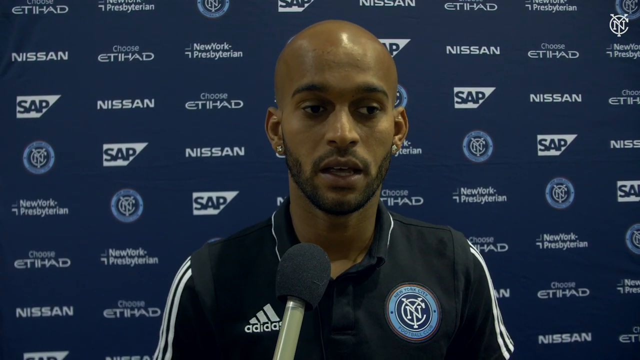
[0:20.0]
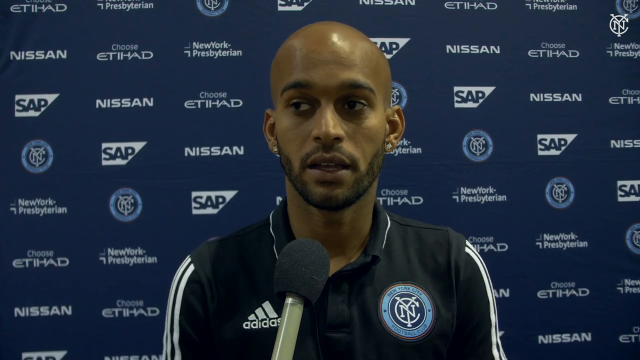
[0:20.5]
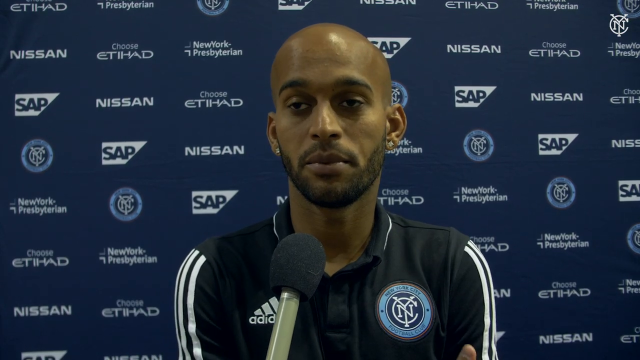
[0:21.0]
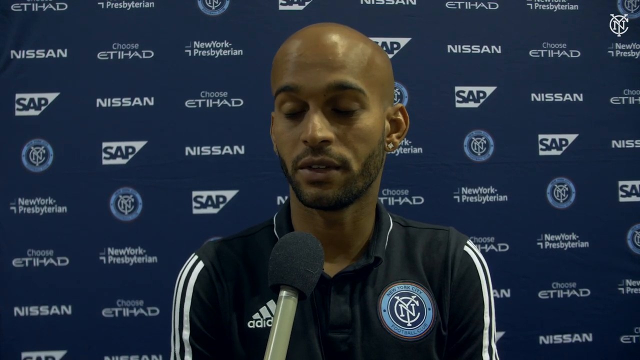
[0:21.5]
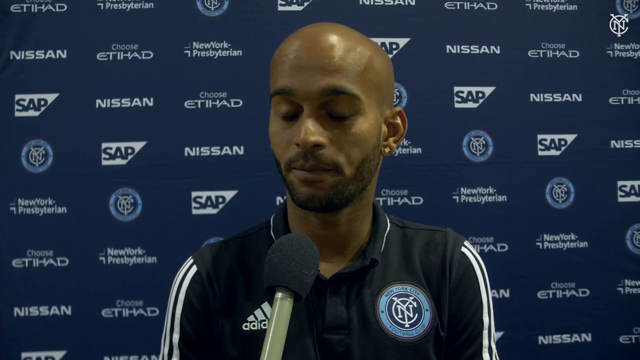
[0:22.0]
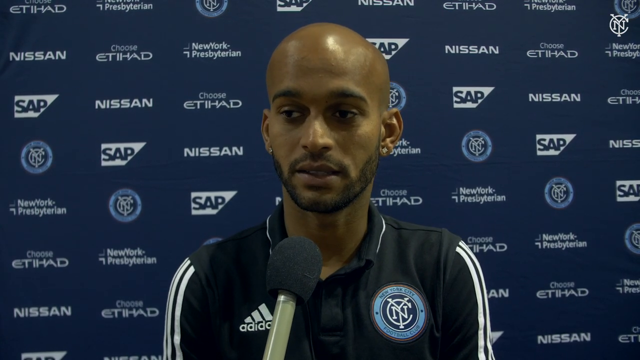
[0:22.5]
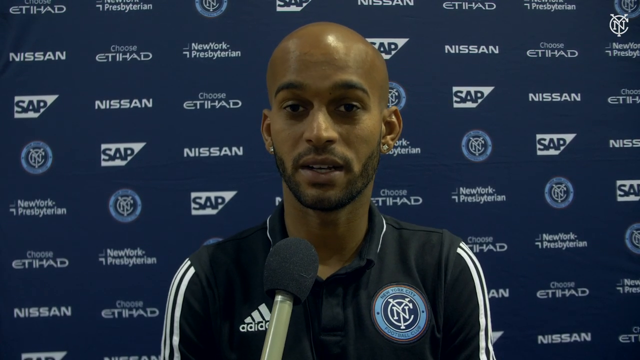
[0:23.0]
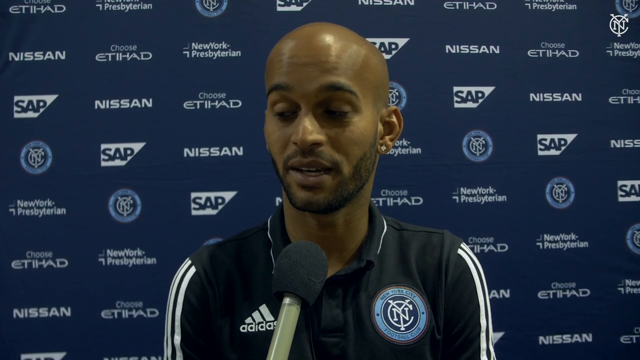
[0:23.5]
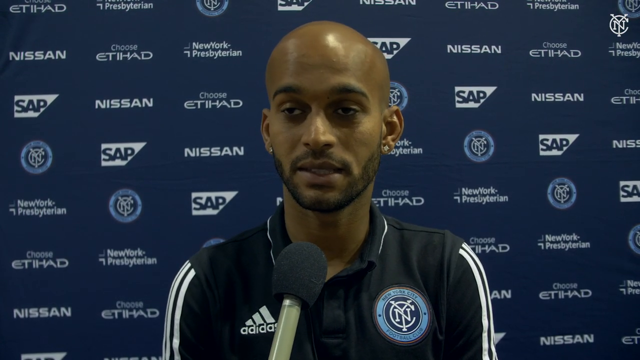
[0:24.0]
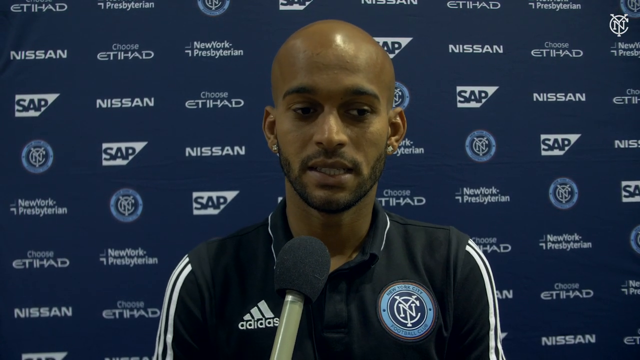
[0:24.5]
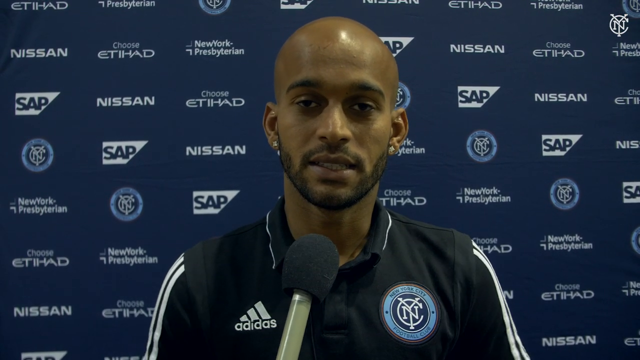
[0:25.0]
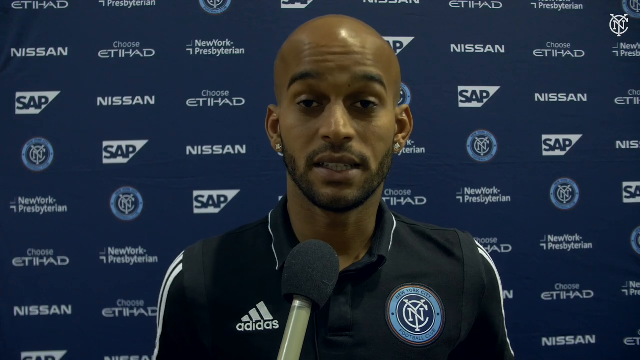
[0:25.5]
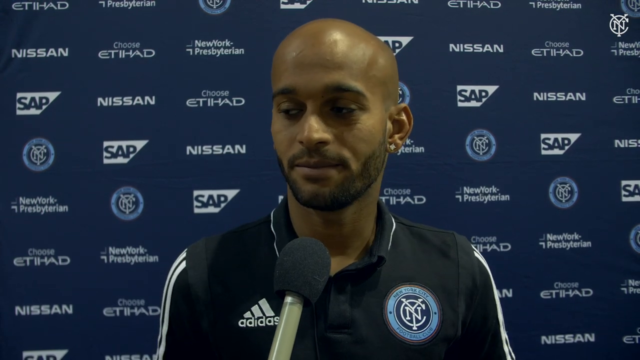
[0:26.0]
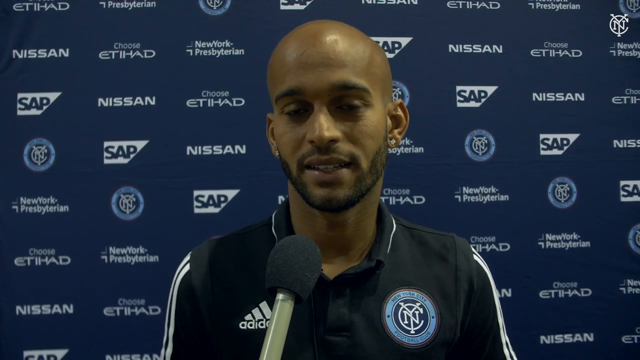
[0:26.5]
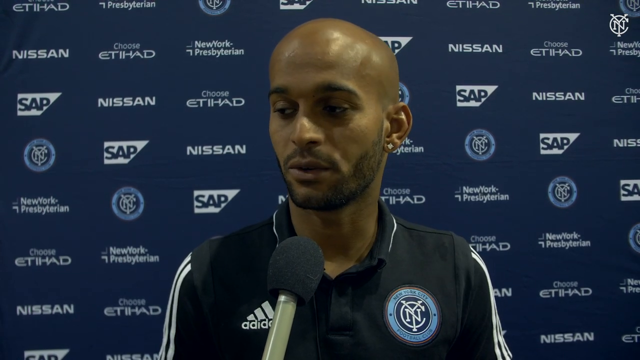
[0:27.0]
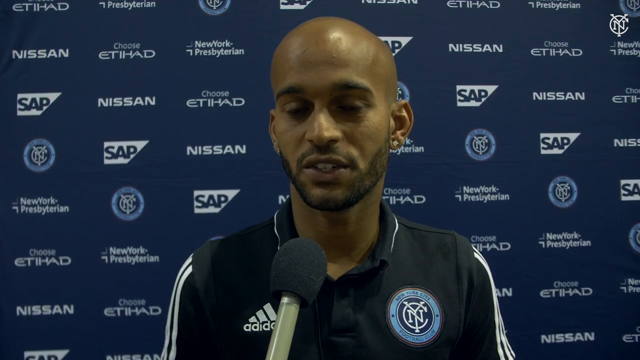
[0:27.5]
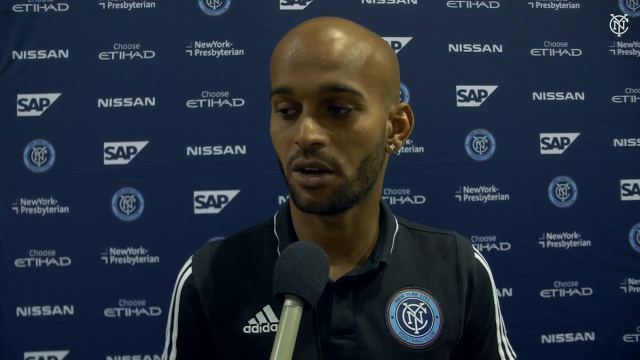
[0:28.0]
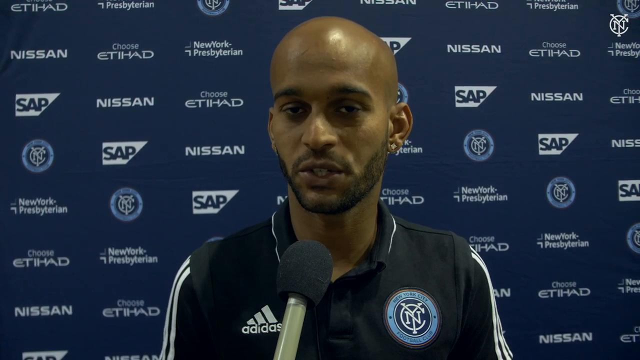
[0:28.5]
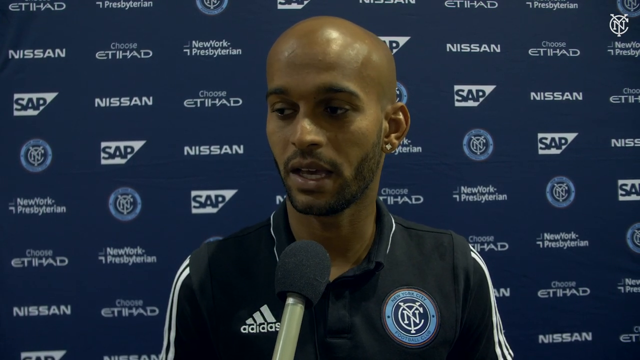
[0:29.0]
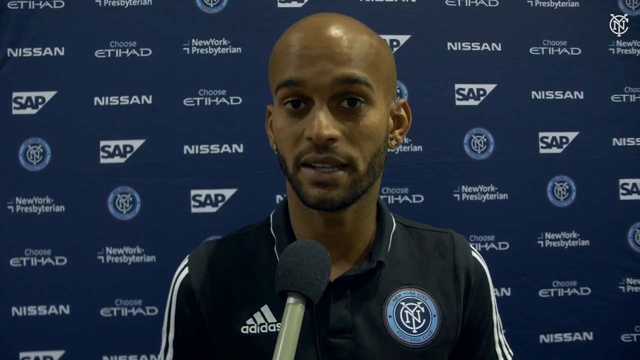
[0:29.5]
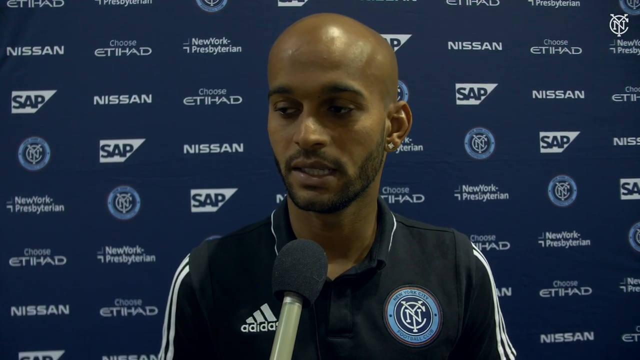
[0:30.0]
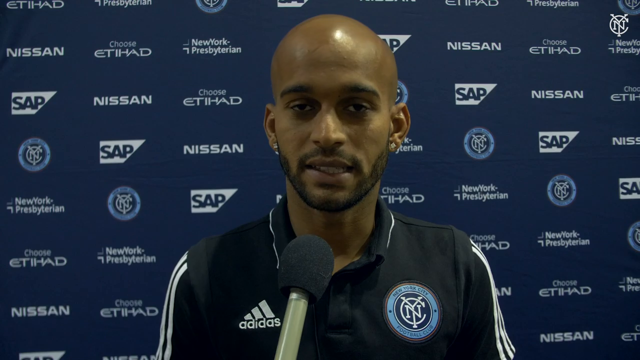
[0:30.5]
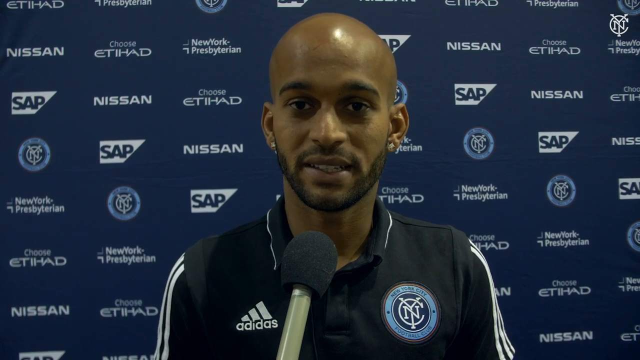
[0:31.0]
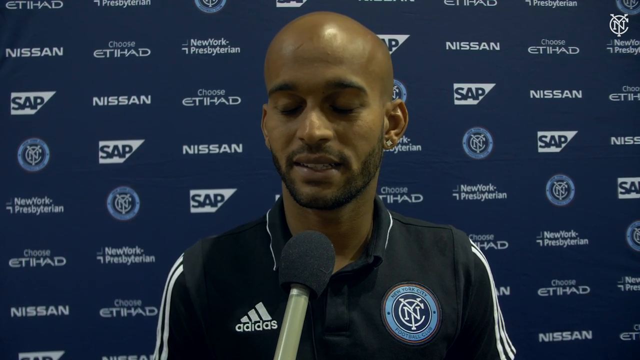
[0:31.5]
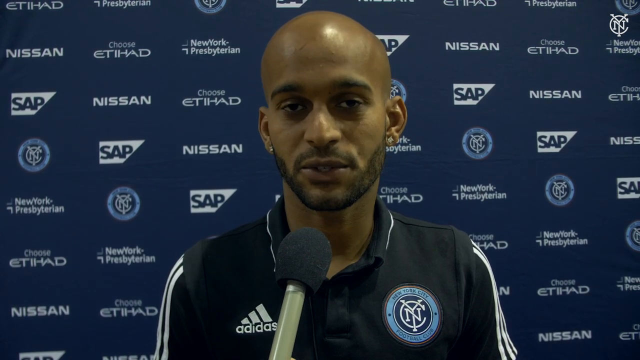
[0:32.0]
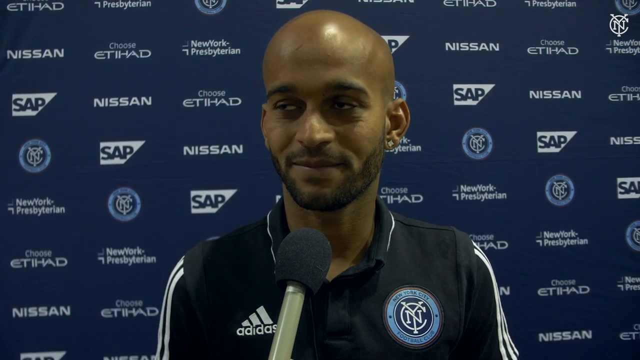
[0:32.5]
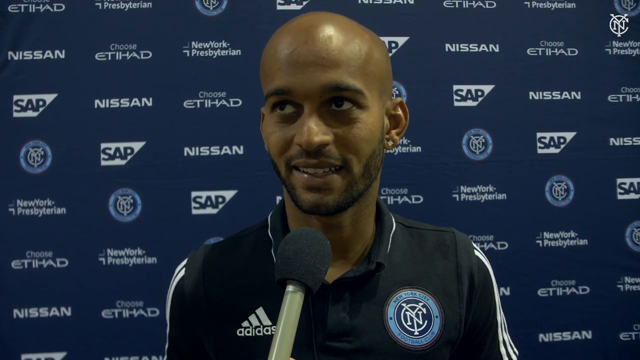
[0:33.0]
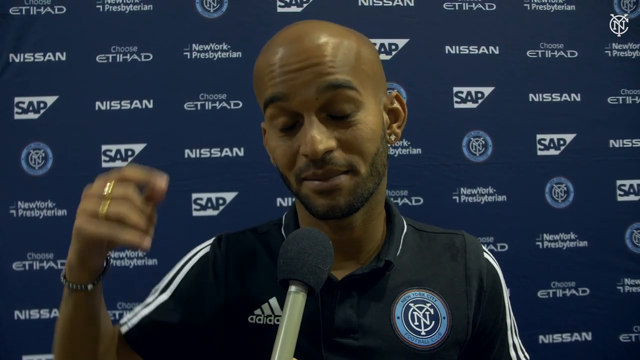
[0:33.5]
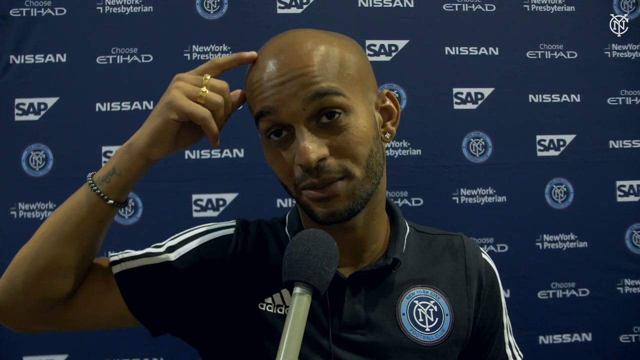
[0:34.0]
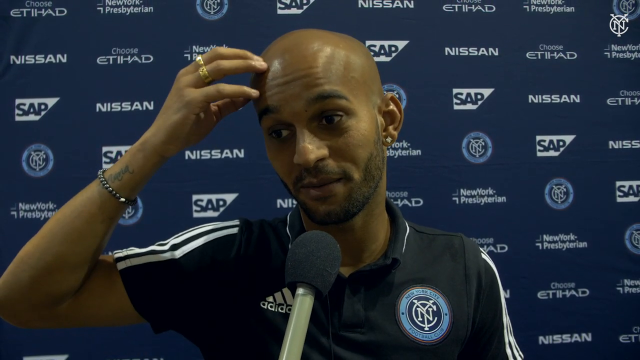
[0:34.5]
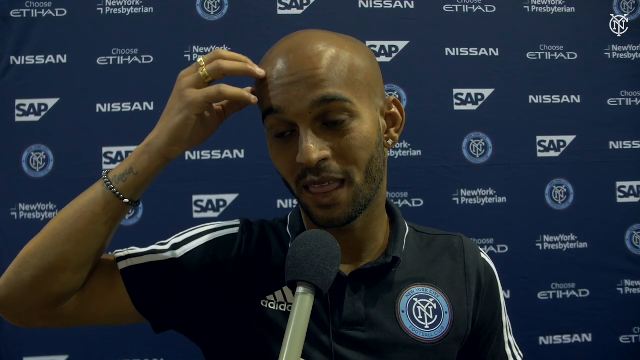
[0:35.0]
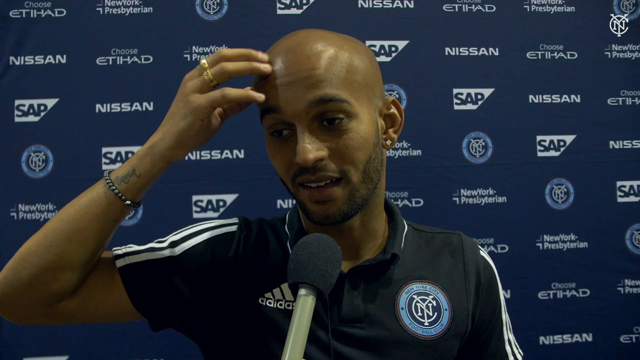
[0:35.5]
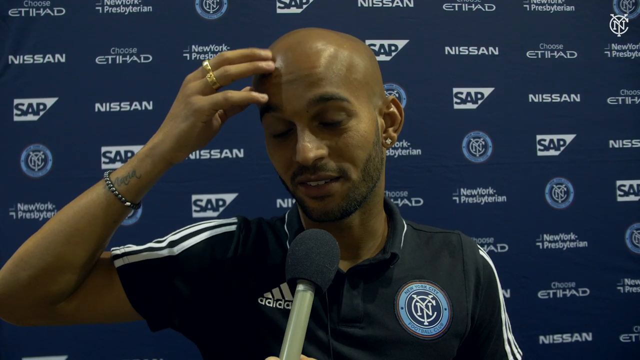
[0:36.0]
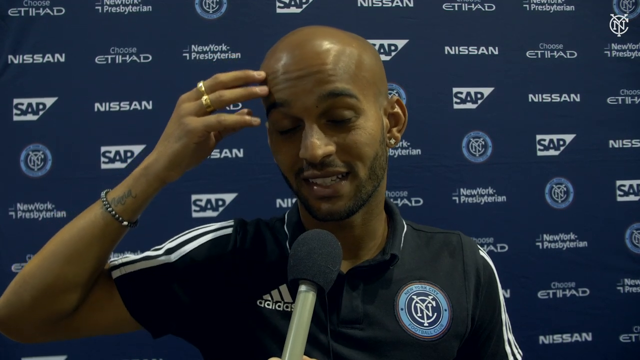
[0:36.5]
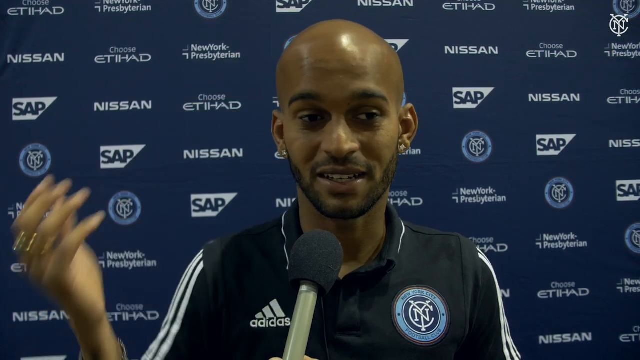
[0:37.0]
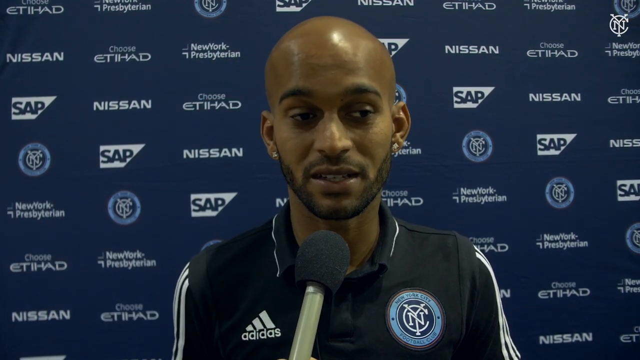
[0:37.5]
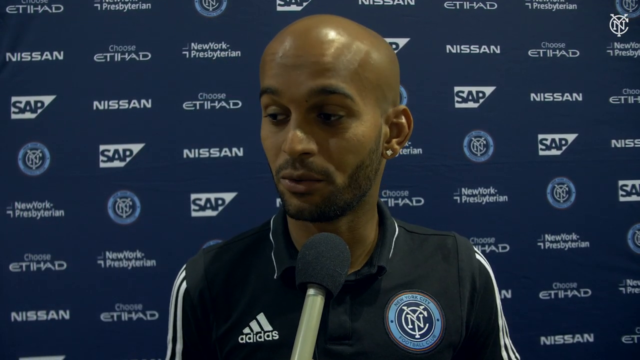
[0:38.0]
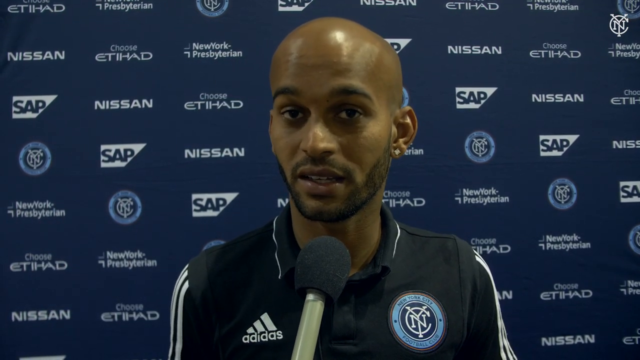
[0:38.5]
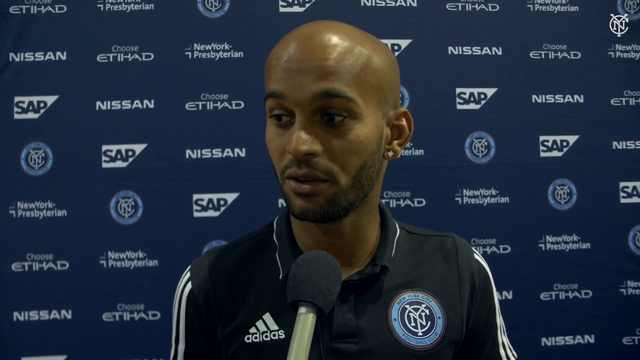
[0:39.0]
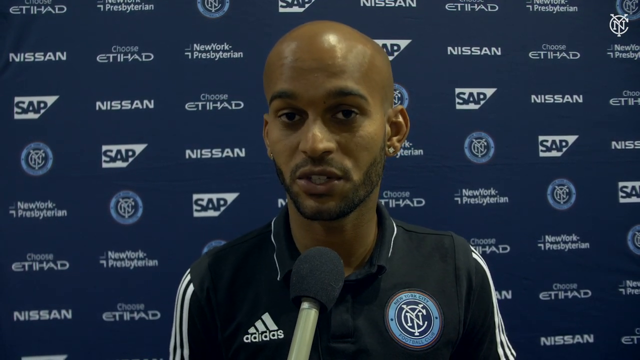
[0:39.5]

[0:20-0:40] A man is being interviewed in a close-up that shows him only from the middle of his chest up. Briefly, he takes his right hand and sort of rubs his left arm. His head is slightly turned to his right, and a microphone comes in from the bottom center of the image as he speaks. He faces the camera and then slightly turns to his right side. He has a very close-shaved beard. He occasionally looks up and to the right. His right hand comes into view as he scratches his head, then he lowers it. Occasionally he leans or looks to his right and back to the camera.